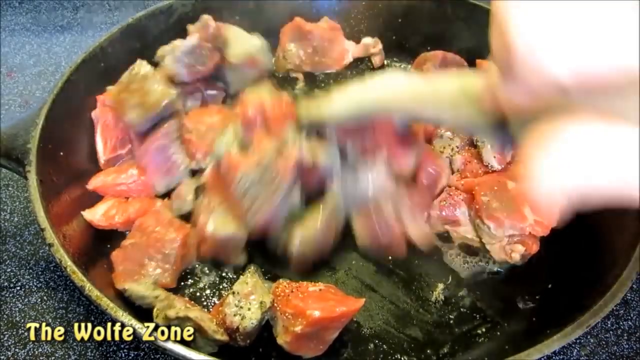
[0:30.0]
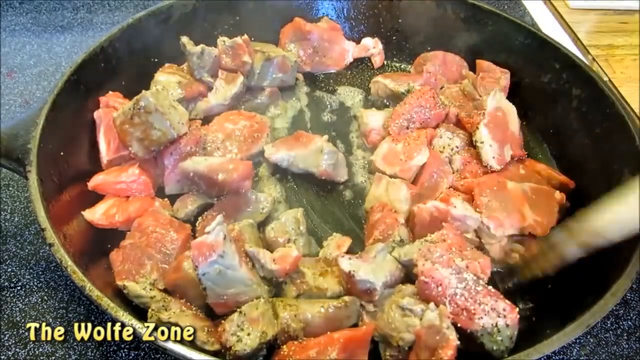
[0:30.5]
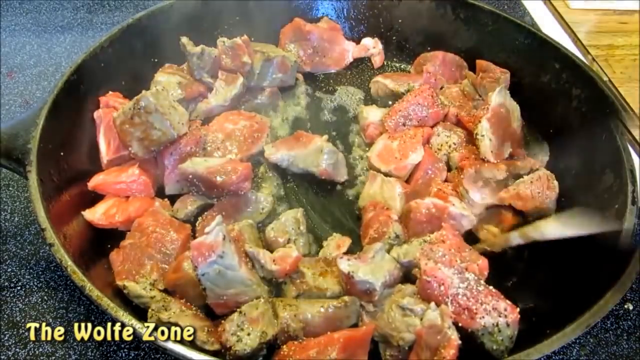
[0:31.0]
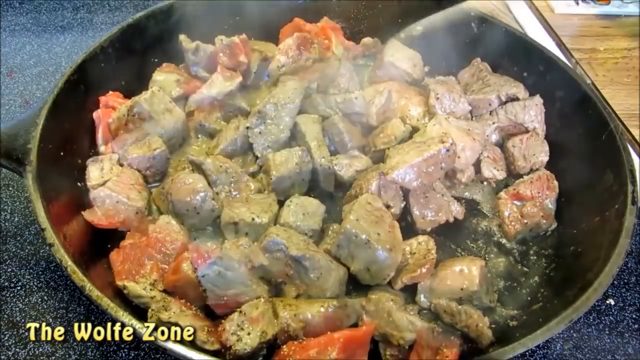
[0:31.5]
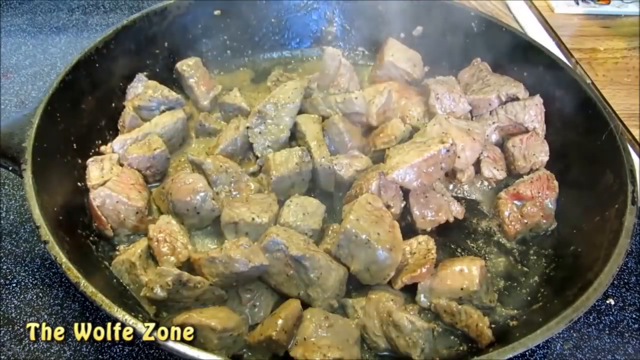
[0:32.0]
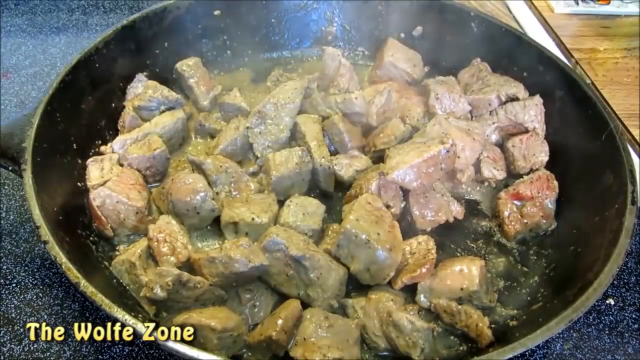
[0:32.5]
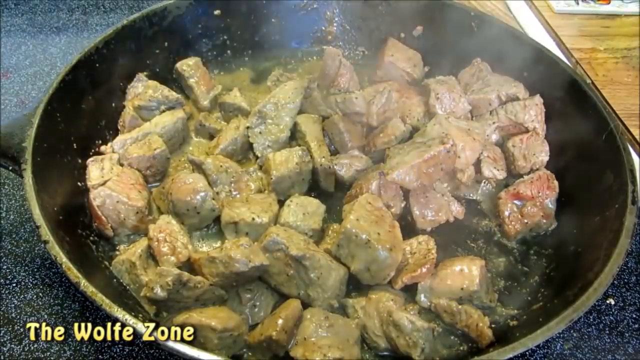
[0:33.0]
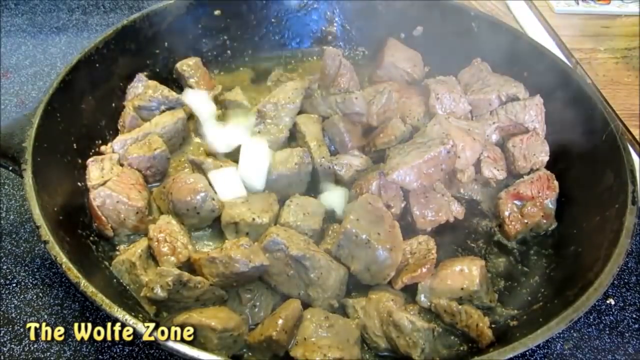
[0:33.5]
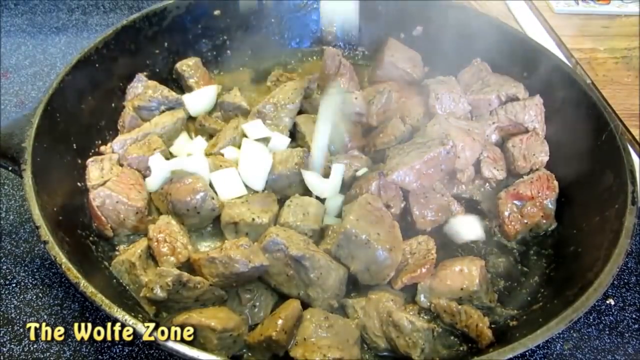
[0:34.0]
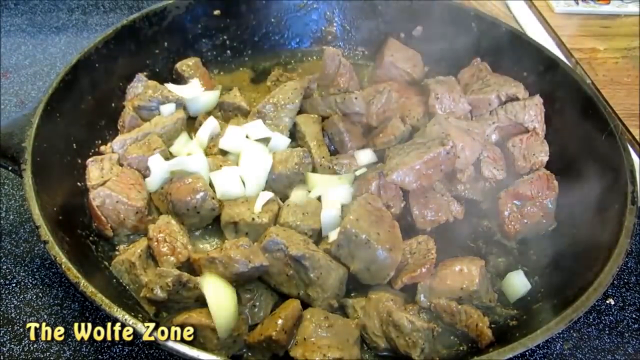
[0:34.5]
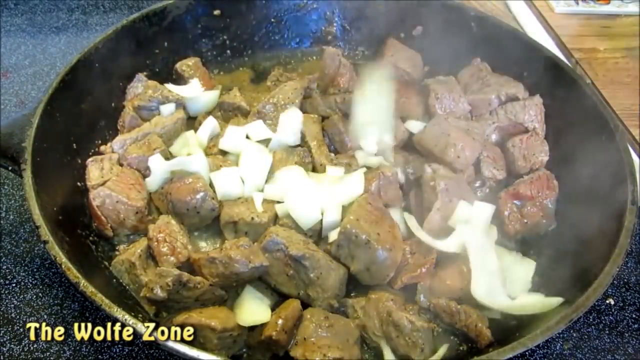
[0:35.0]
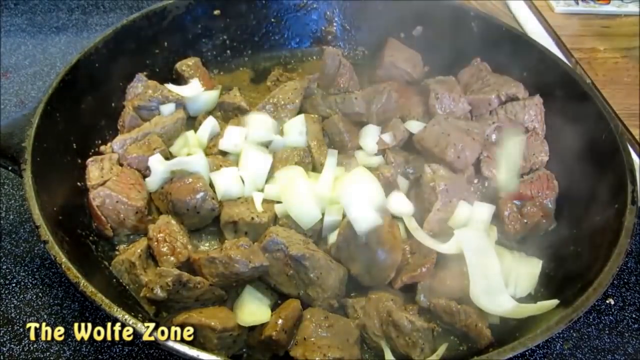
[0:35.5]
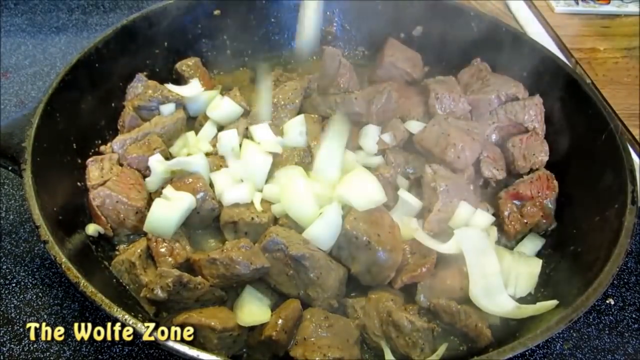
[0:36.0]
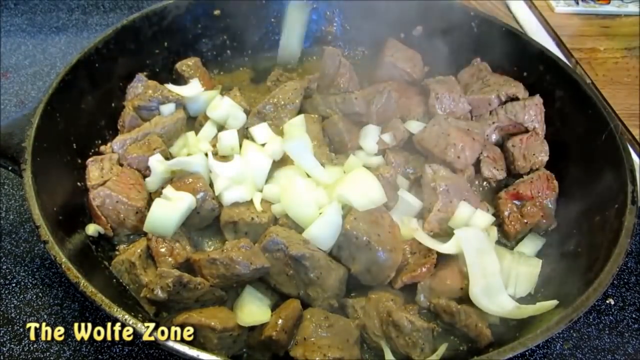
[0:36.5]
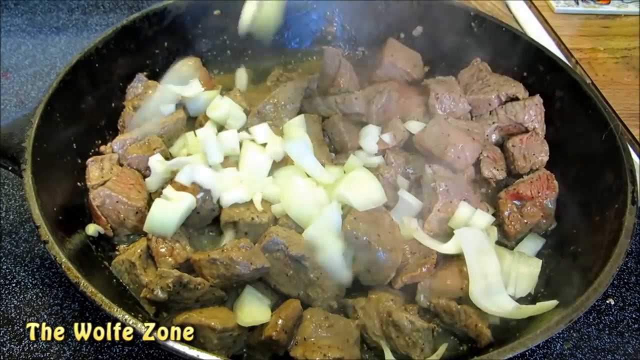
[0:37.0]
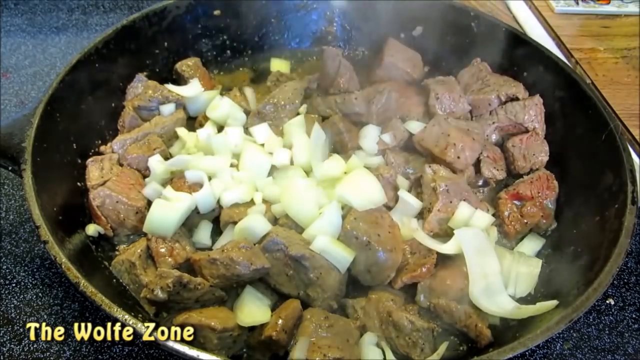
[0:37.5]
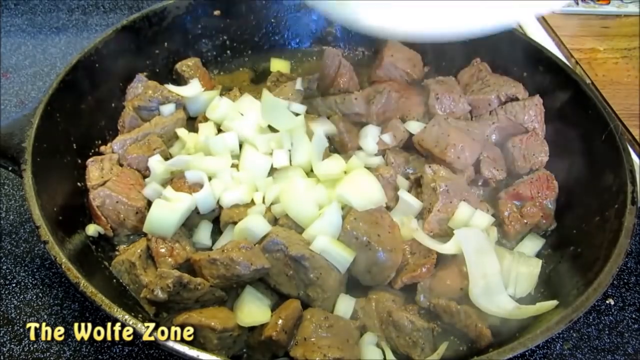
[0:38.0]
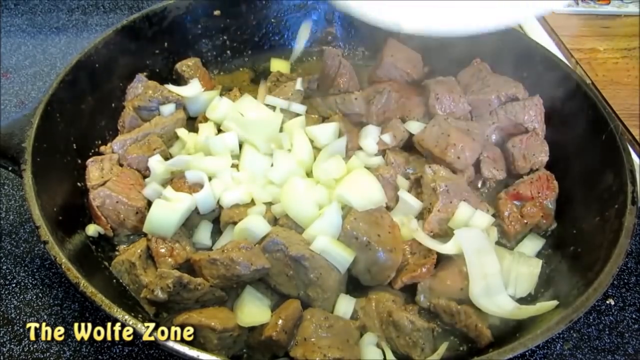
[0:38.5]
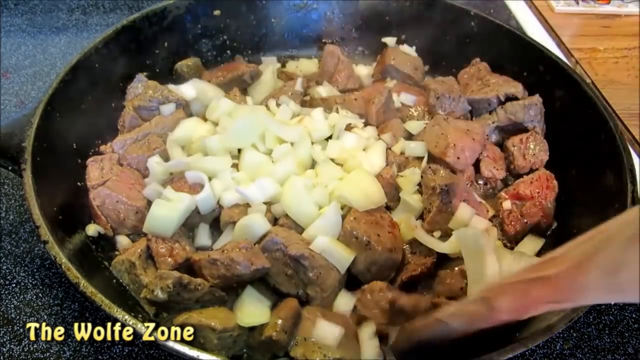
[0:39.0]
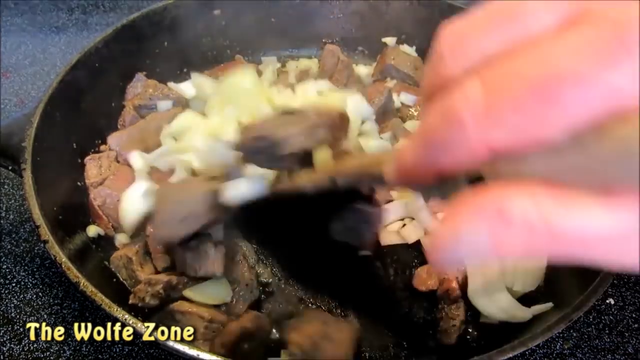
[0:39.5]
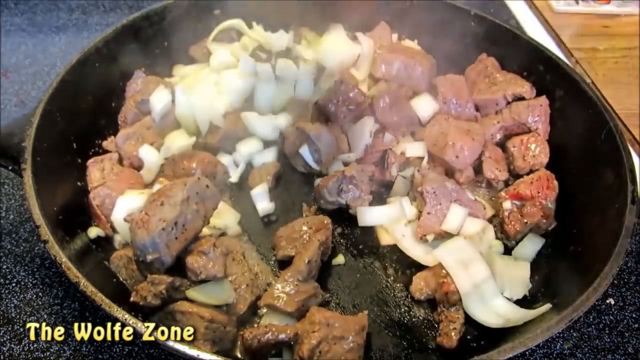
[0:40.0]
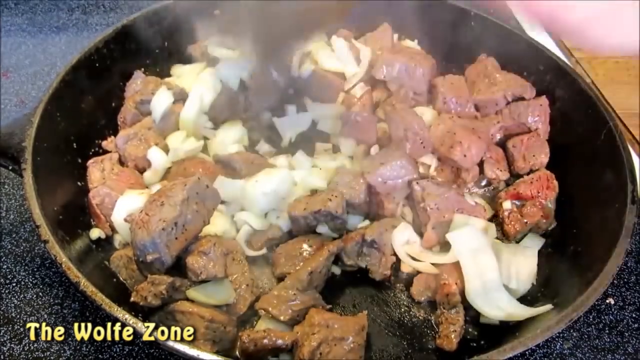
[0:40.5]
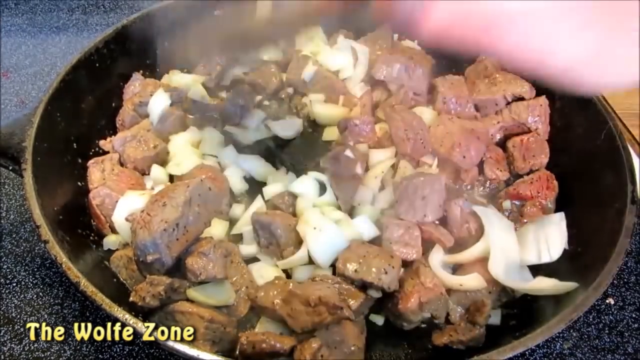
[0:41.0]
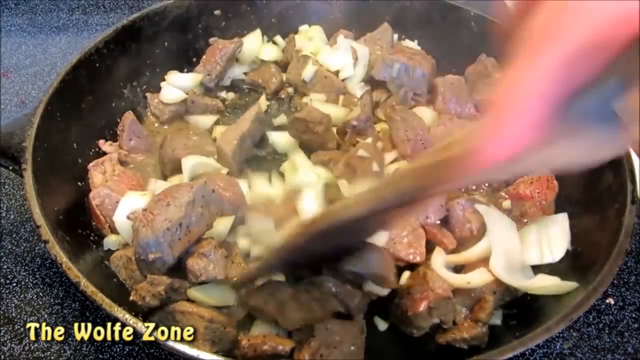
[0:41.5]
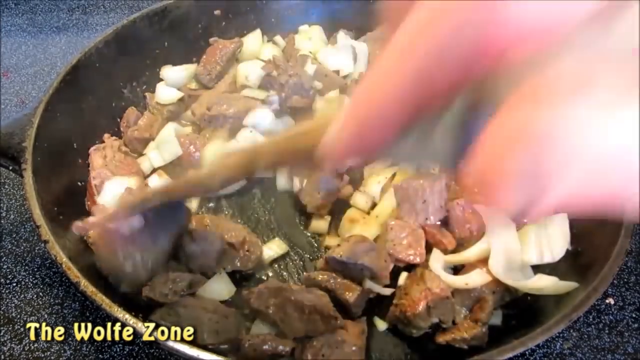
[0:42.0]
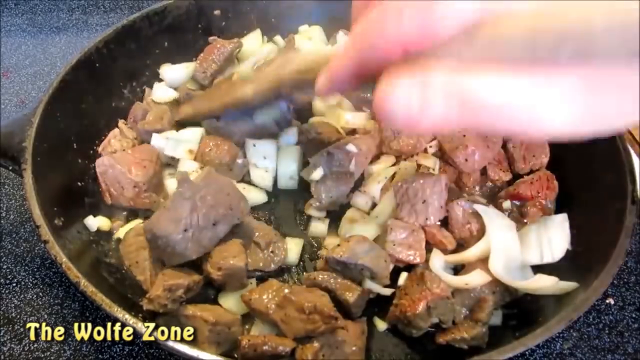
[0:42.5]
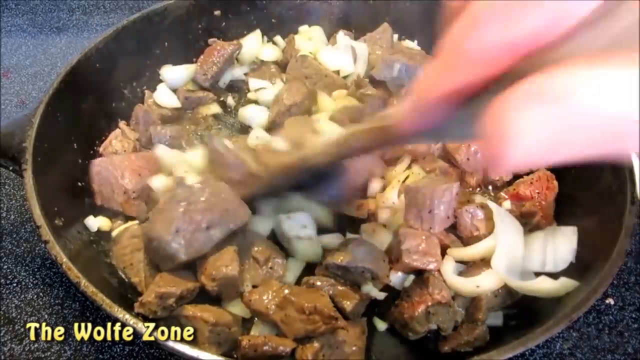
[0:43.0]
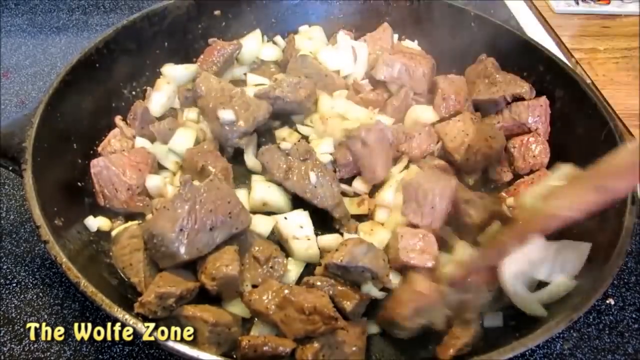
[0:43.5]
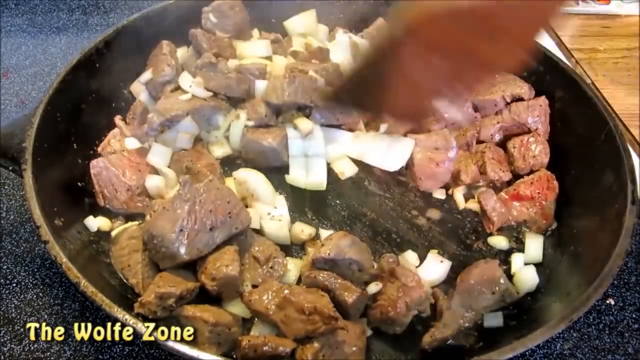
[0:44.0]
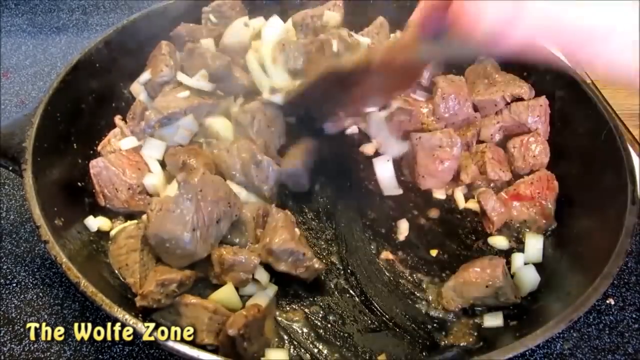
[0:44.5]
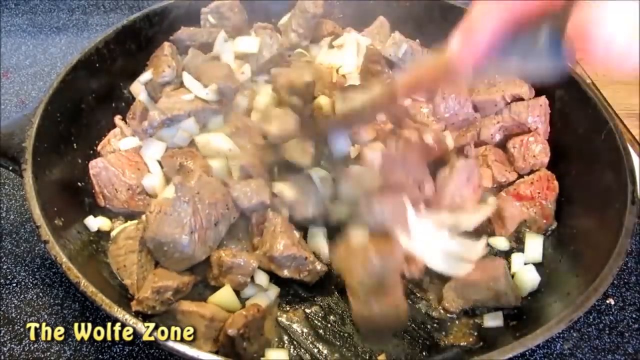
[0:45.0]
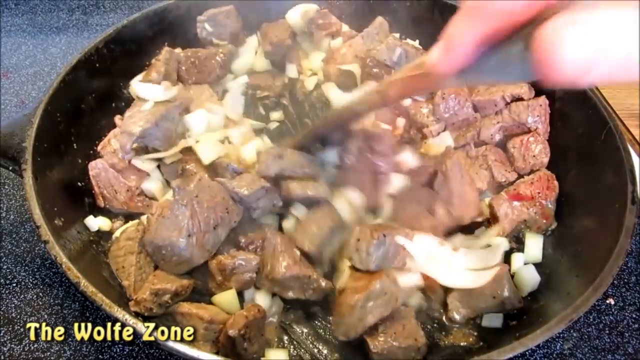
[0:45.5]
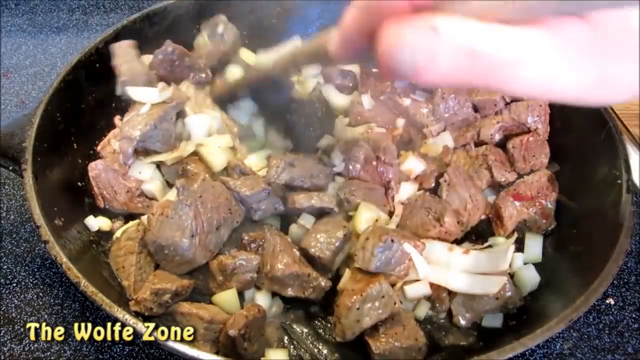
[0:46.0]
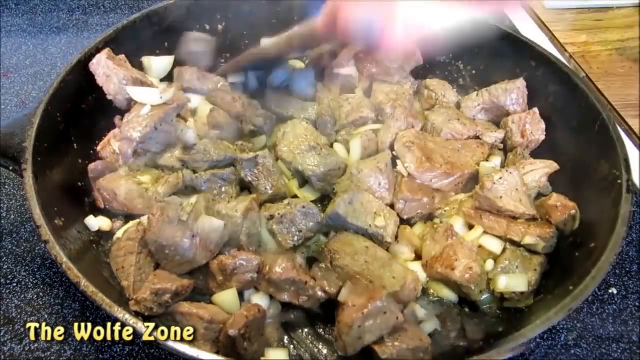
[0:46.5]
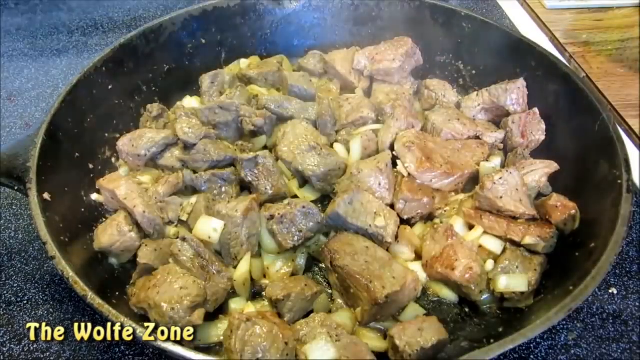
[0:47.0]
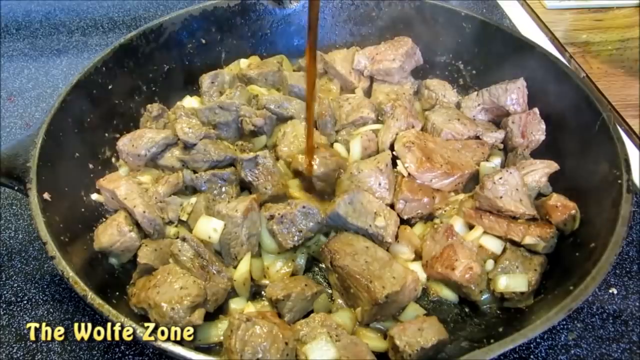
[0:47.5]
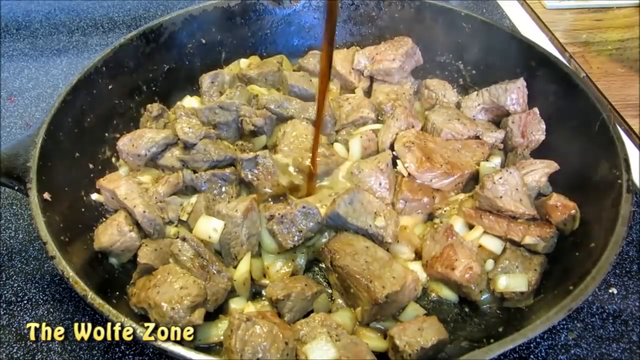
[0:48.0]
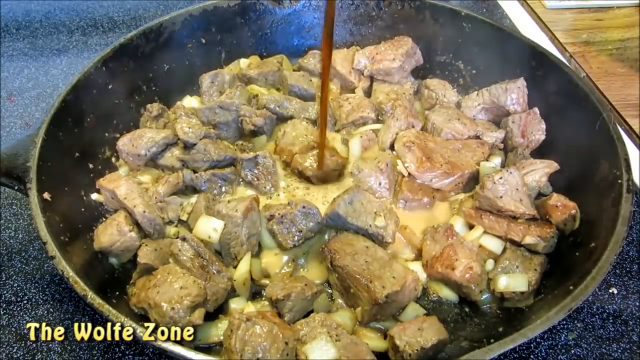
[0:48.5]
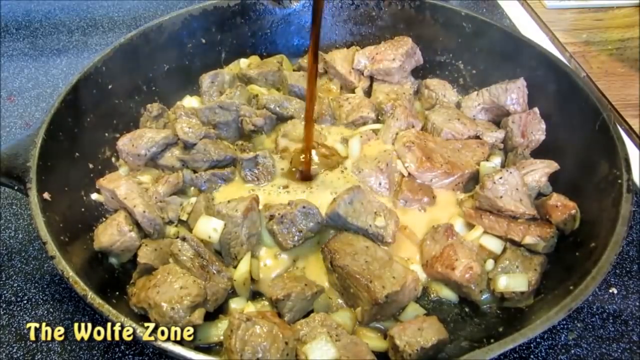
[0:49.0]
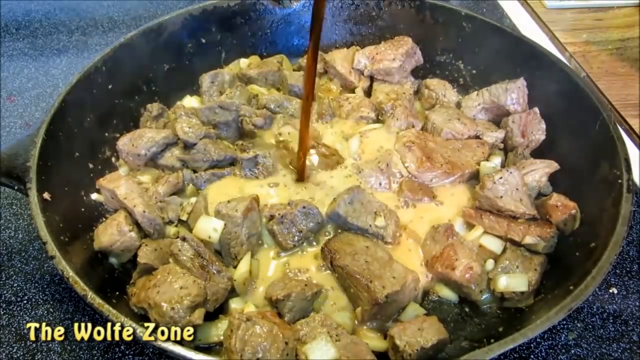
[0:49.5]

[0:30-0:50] A man, apparently the host of the show, keeps stirring the steak until it is brown on all sides, still a little bloody in some parts. He then adds what is most likely chopped onion, quite a lot of it, though it could be something else. He drizzles in something that looks like either soy or Worcestershire sauce, though it may instead be Coca-Cola. He keeps stirring the pan so the meat cooks evenly on all sides; the pieces of meat are not all even.